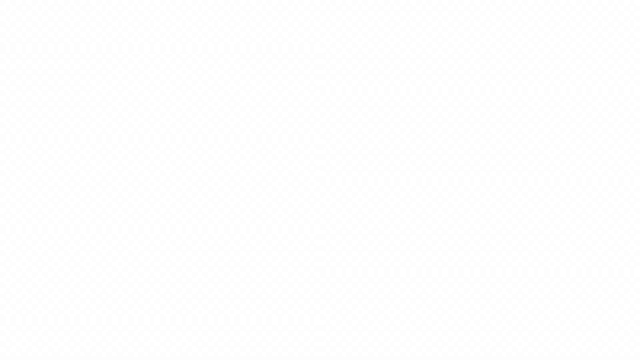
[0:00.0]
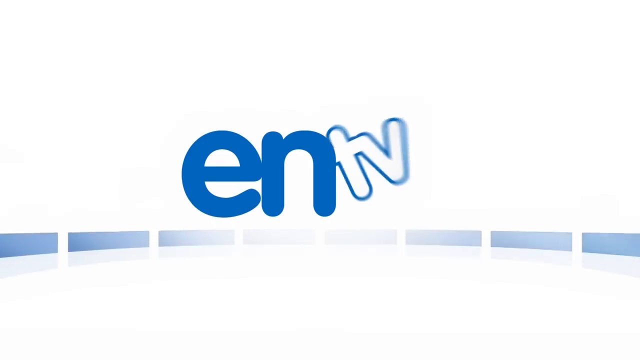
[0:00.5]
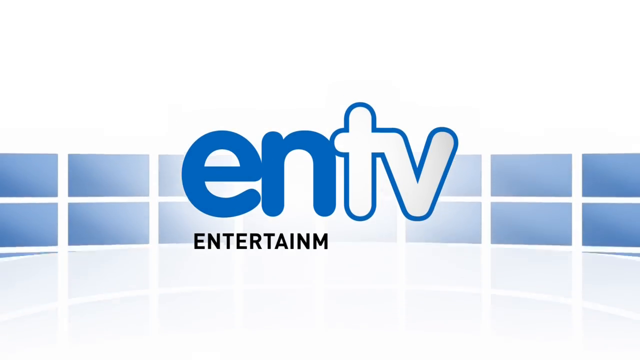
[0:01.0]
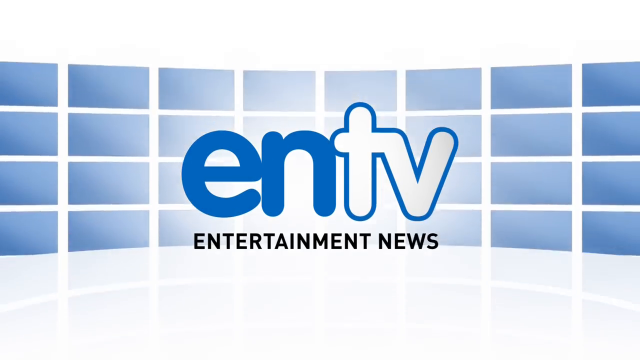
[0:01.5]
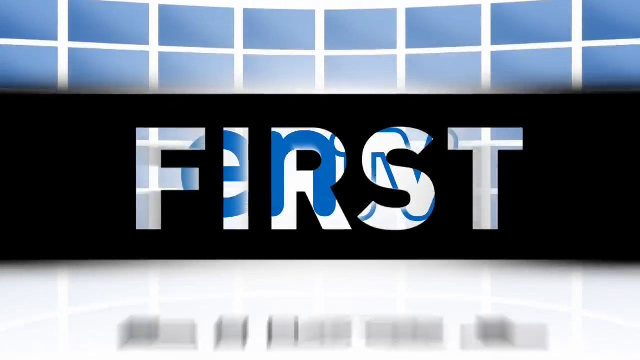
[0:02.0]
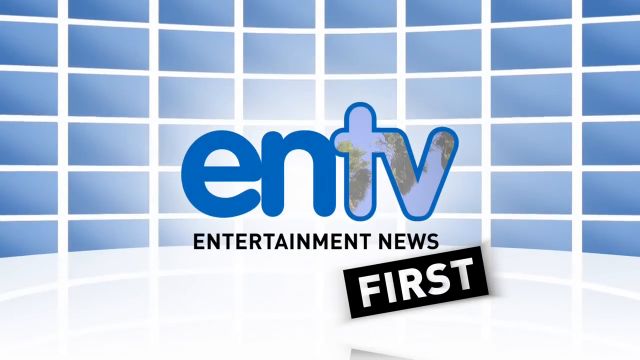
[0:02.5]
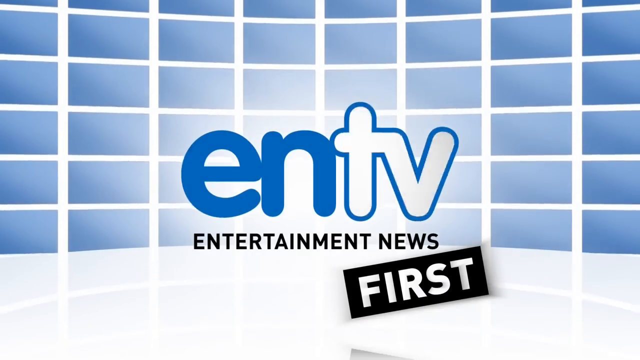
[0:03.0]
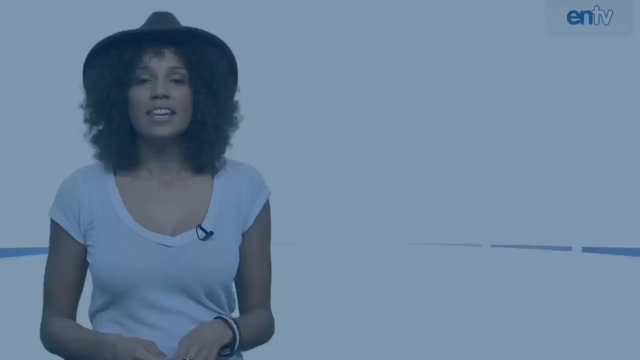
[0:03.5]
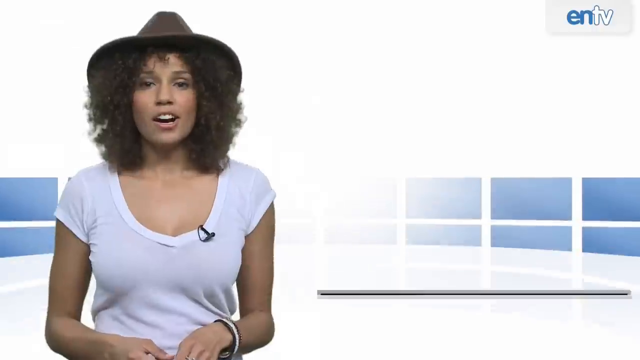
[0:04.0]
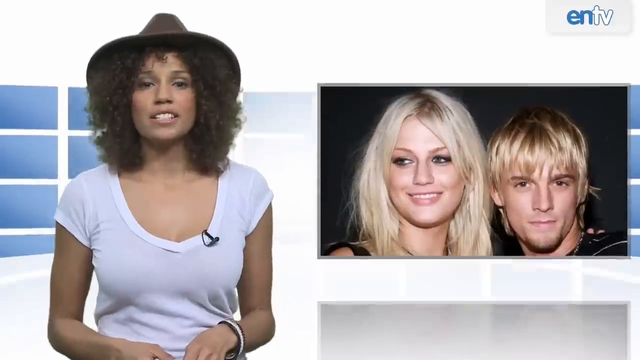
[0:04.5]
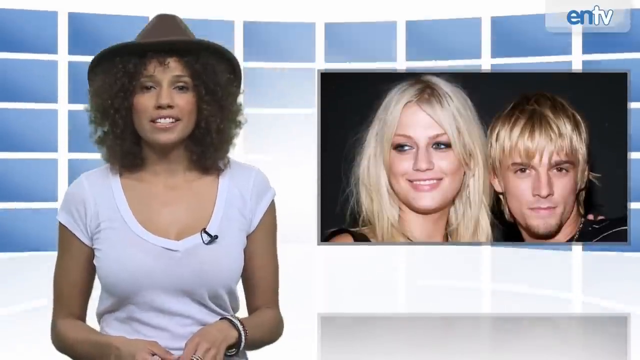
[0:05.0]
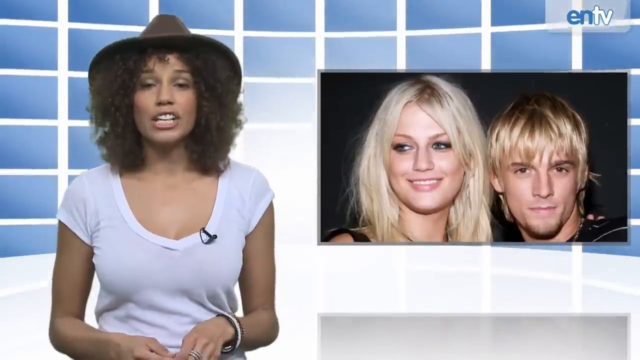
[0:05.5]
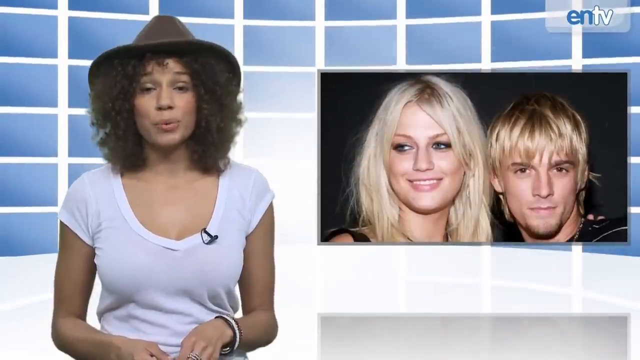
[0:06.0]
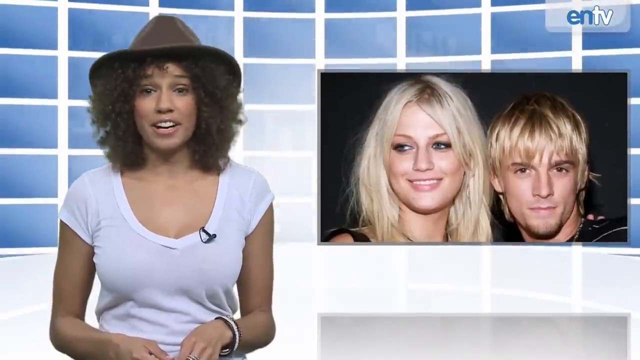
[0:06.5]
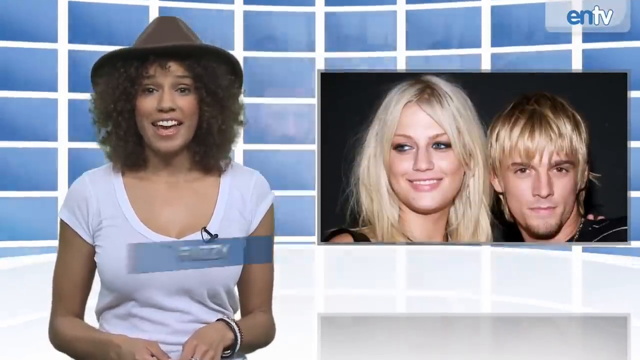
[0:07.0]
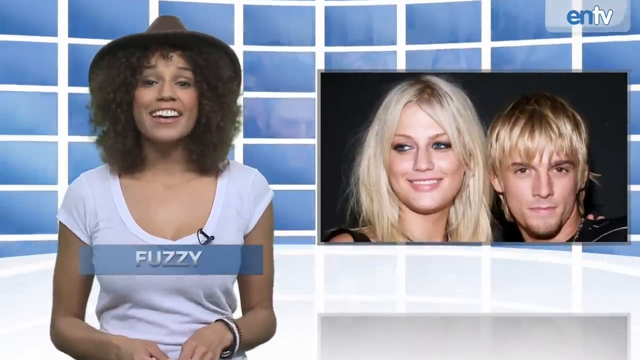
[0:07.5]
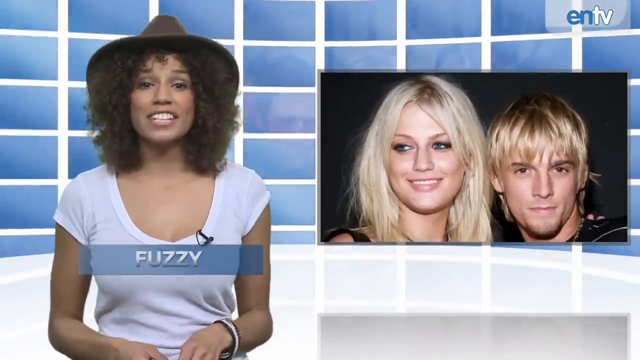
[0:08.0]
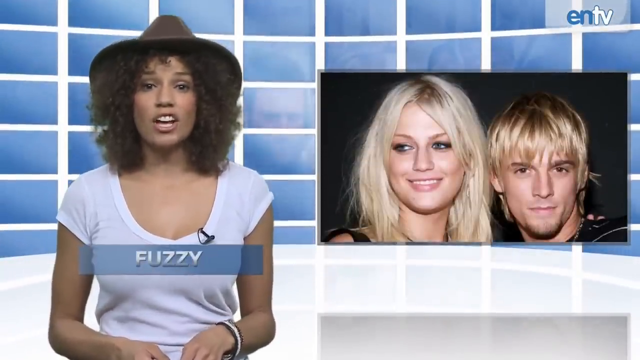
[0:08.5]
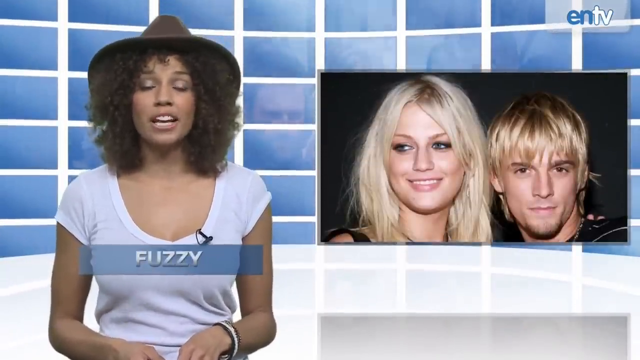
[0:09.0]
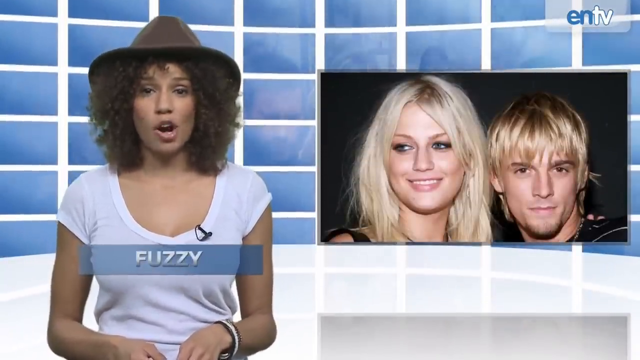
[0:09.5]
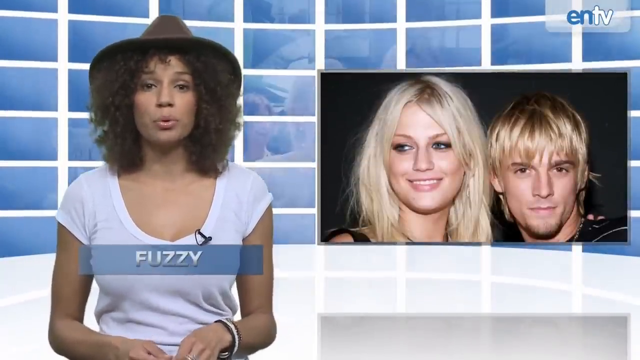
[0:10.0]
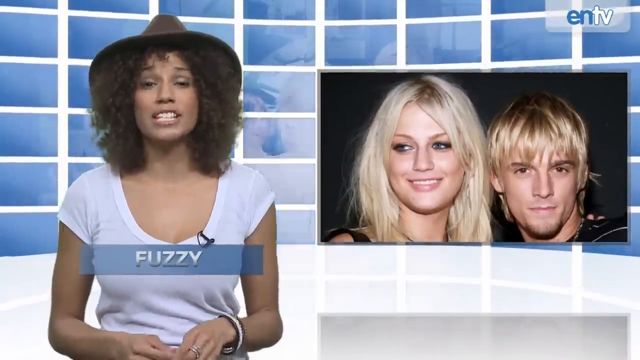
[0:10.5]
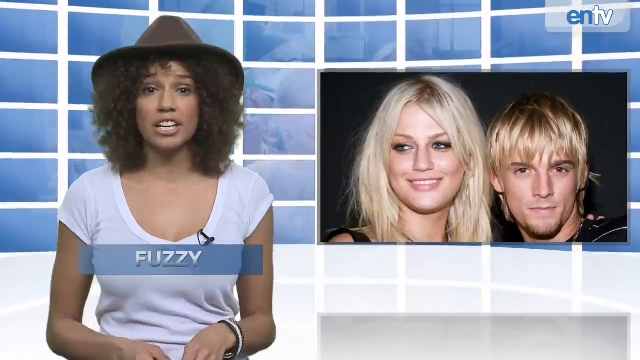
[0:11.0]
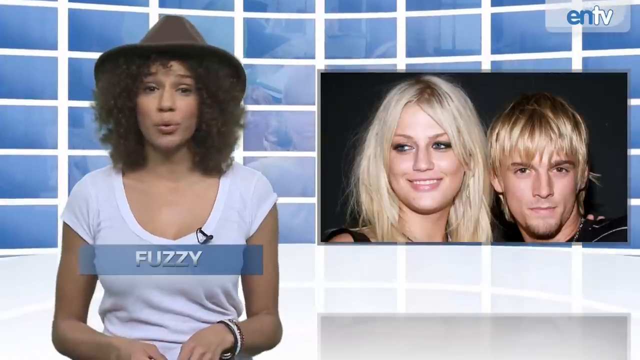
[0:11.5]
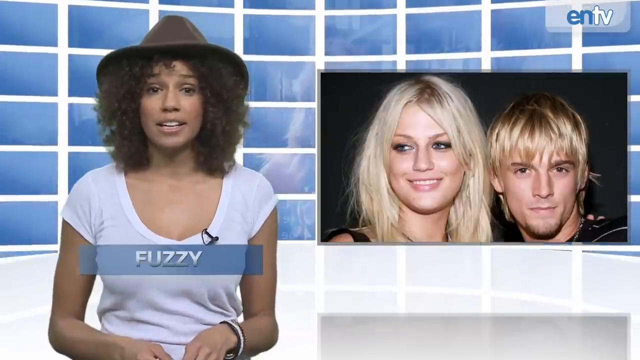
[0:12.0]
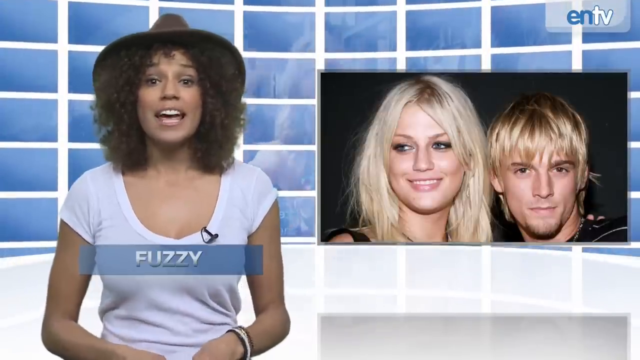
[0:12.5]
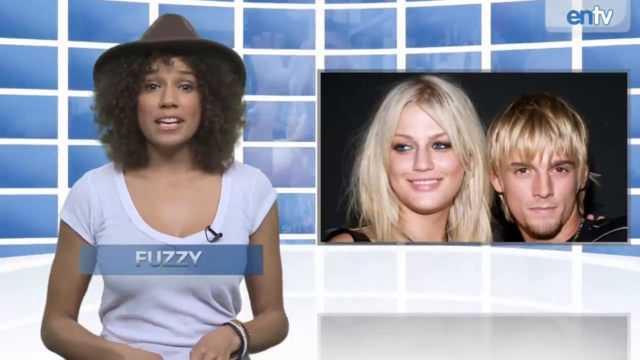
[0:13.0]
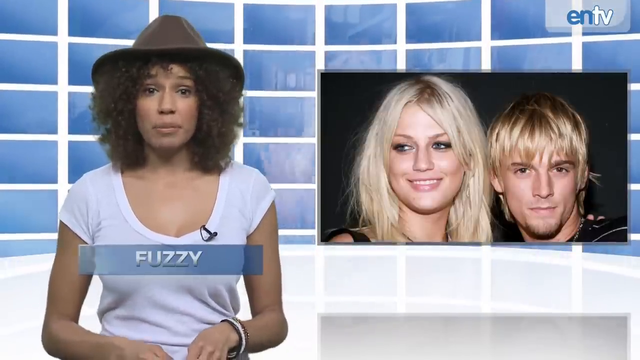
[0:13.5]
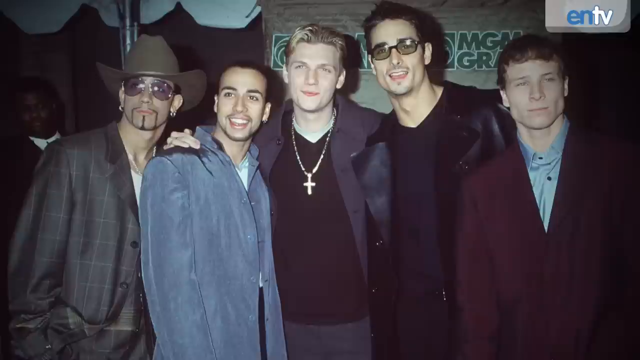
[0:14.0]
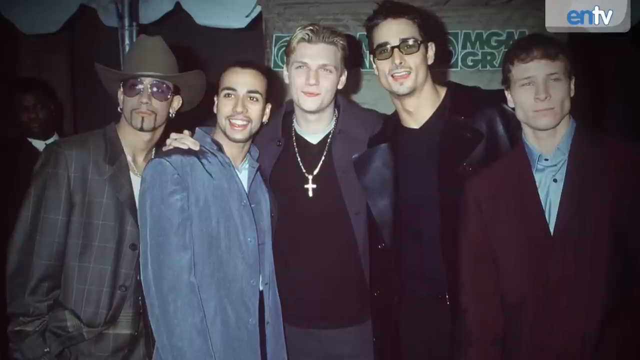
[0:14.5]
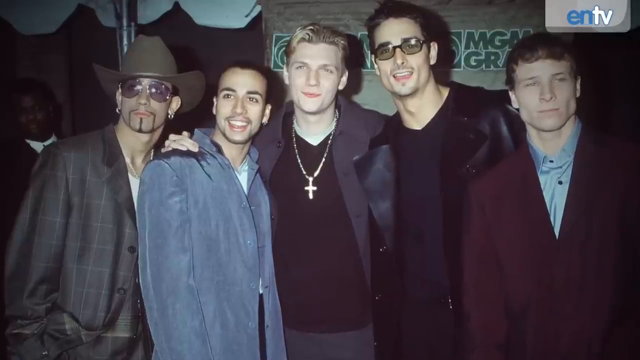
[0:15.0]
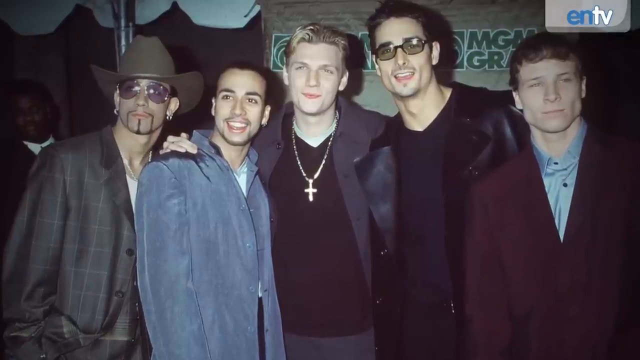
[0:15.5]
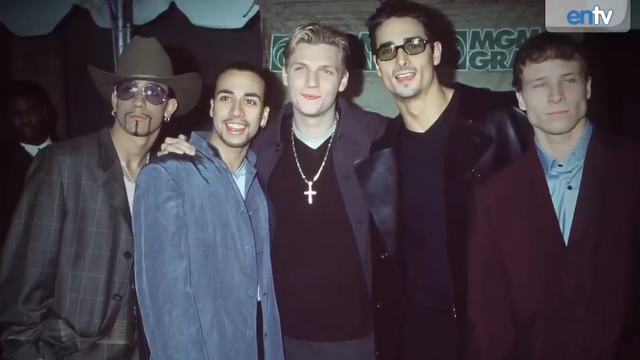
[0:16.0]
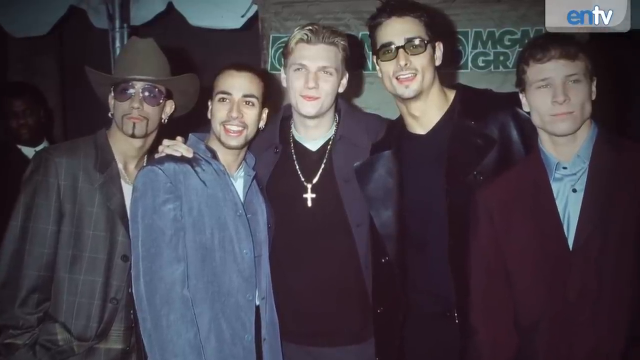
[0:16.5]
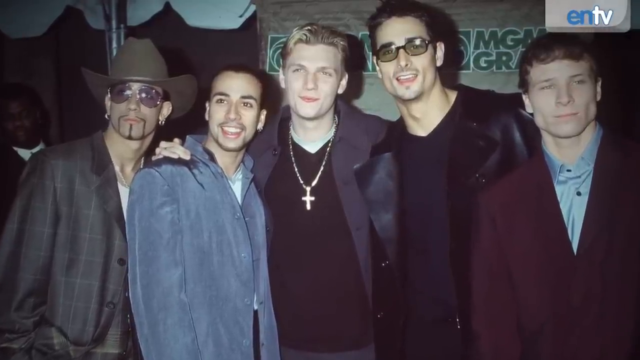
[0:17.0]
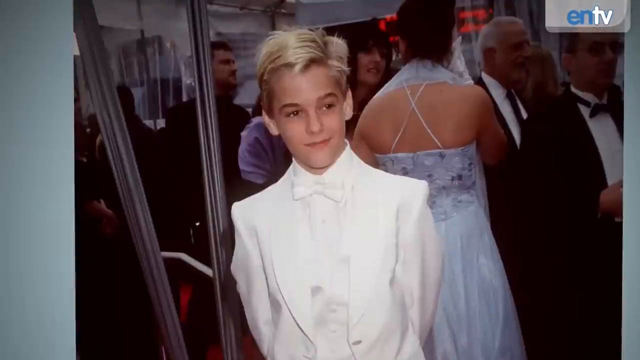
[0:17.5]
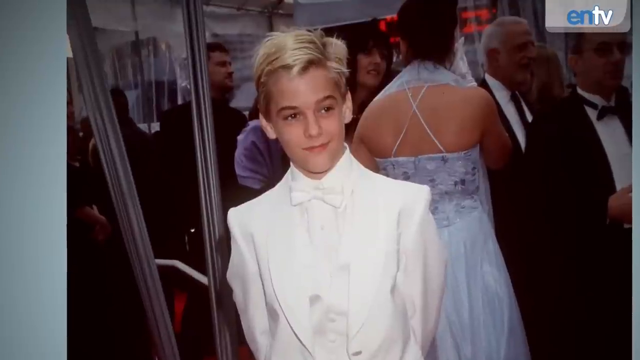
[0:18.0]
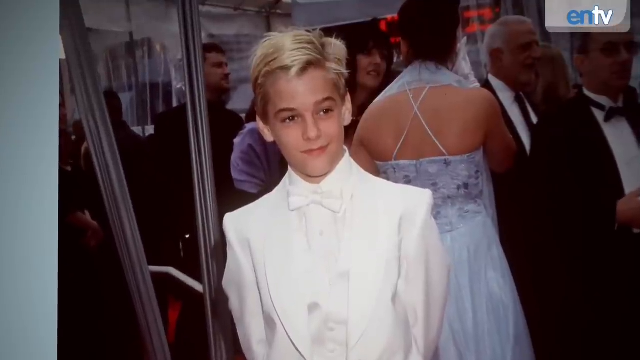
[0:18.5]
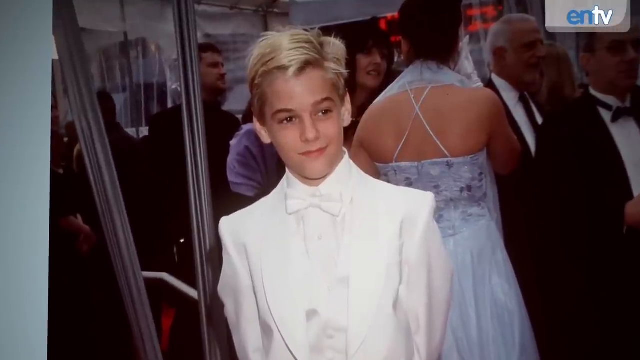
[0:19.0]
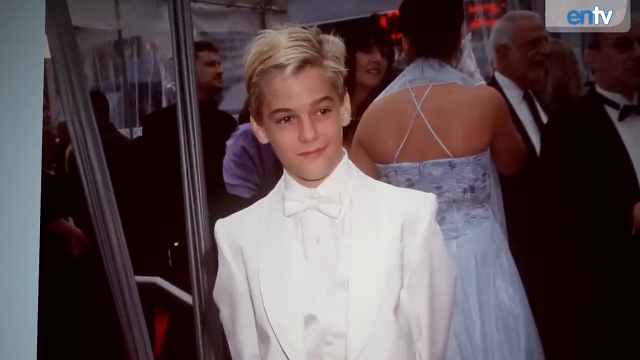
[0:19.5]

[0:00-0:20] The video comes from ENTV Entertainment News and is titled Leslie Carter Dead, Sister of Nick and Aaron Carter Dies at 26, ENTV. In a white newsroom setting, a newscaster wearing a white t-shirt and a brown hat speaks directly to camera, and a caption gives her name as Fuzzy. Next to her on the right-hand side is a photo of two people, a blonde woman and a blonde man, whose identities are unclear, presumably two of the Carters. The video cuts to a photo of what seems to be a boy band, with no caption. An image then shows a young blonde man wearing a white tuxedo on a red carpet.